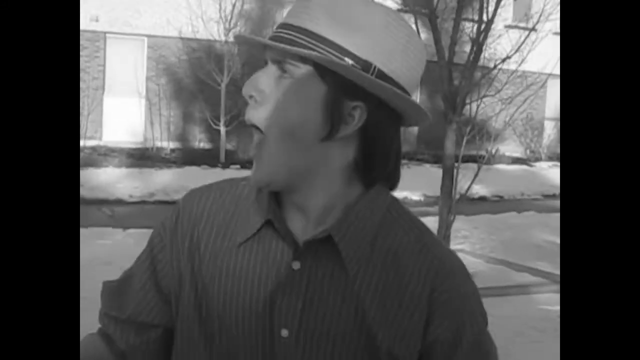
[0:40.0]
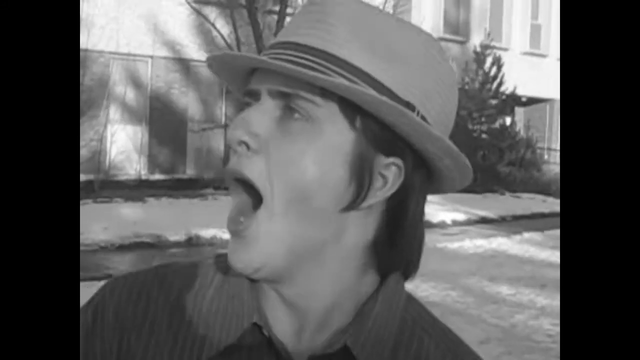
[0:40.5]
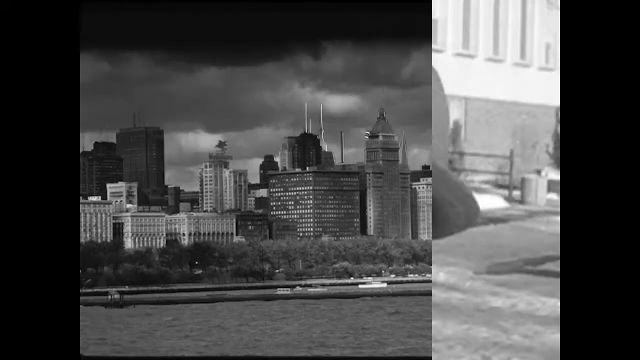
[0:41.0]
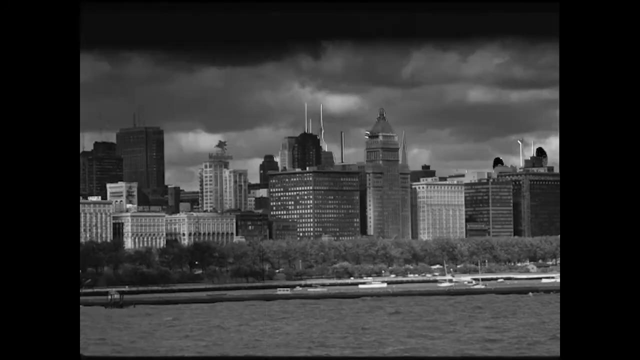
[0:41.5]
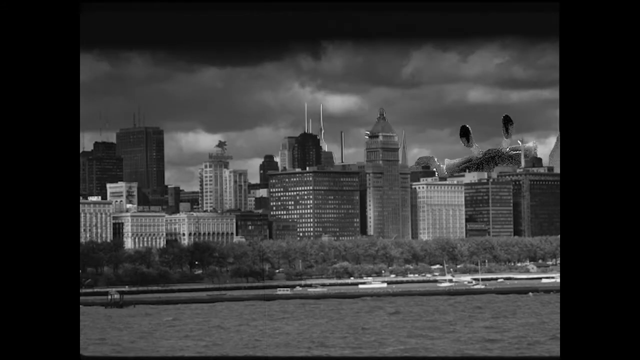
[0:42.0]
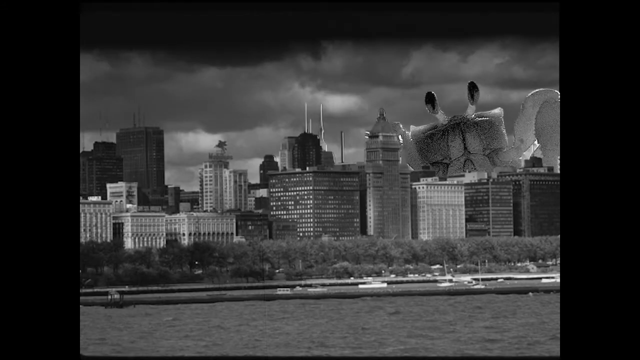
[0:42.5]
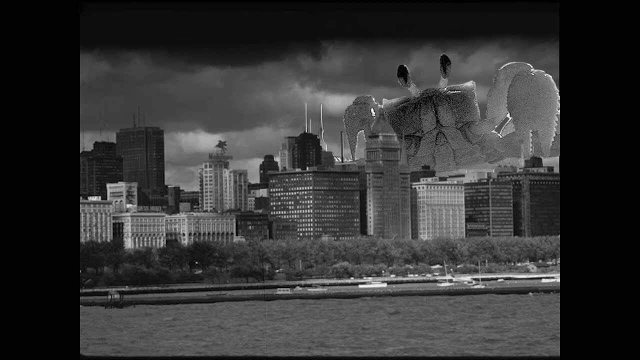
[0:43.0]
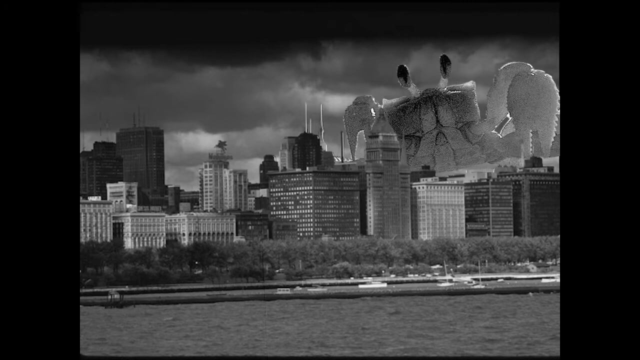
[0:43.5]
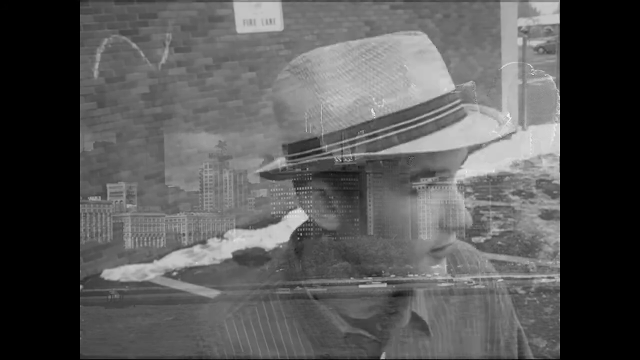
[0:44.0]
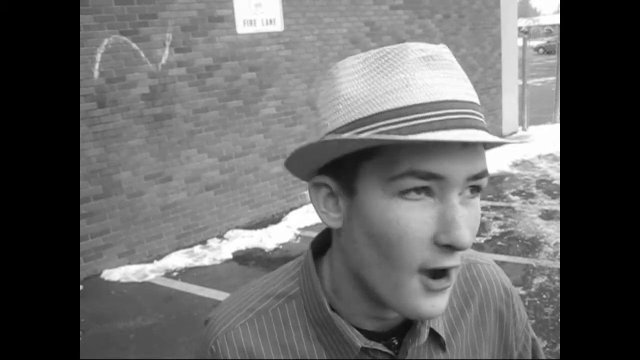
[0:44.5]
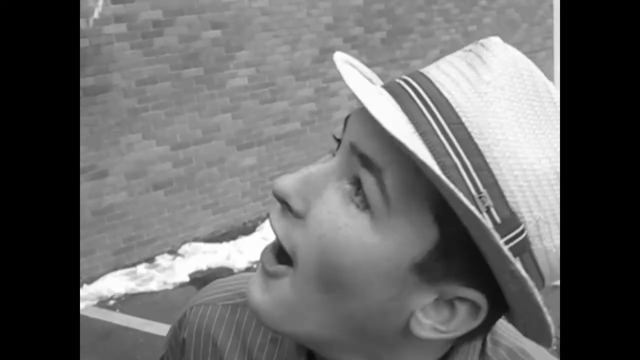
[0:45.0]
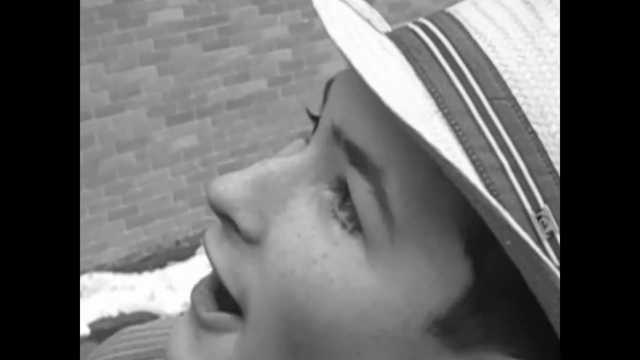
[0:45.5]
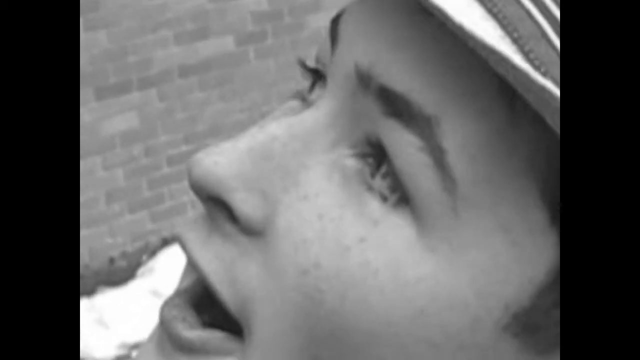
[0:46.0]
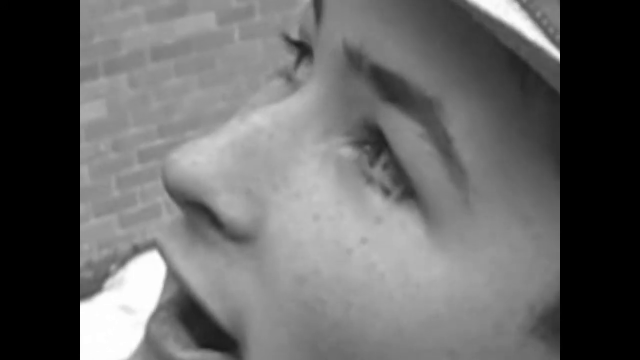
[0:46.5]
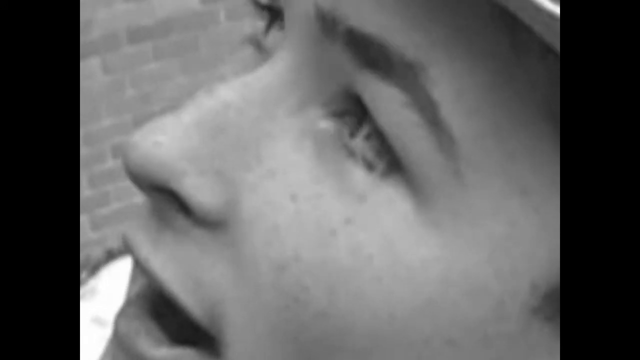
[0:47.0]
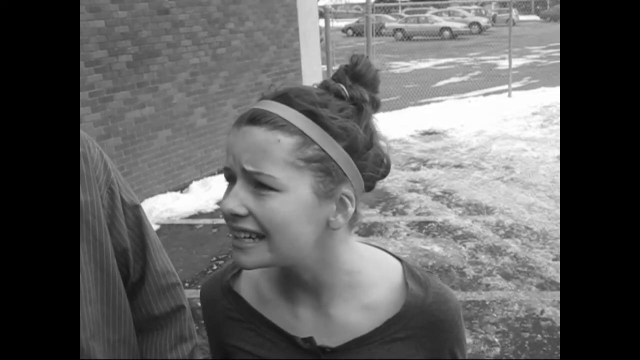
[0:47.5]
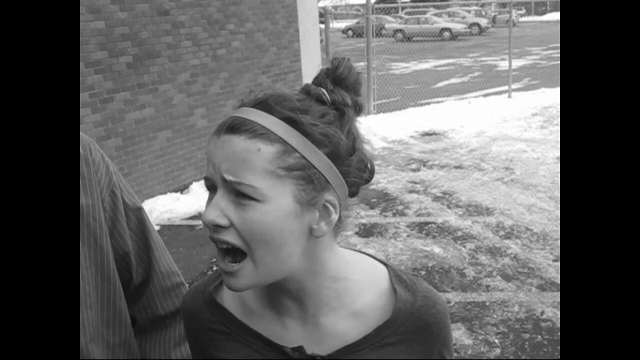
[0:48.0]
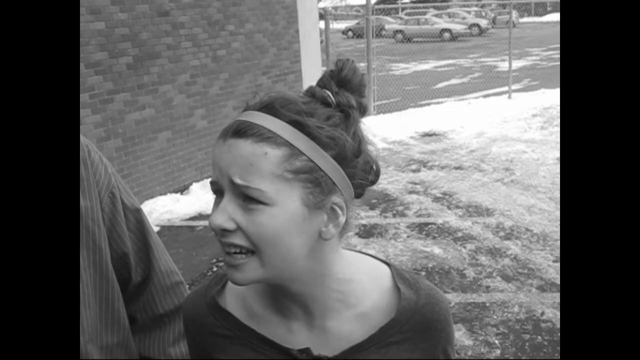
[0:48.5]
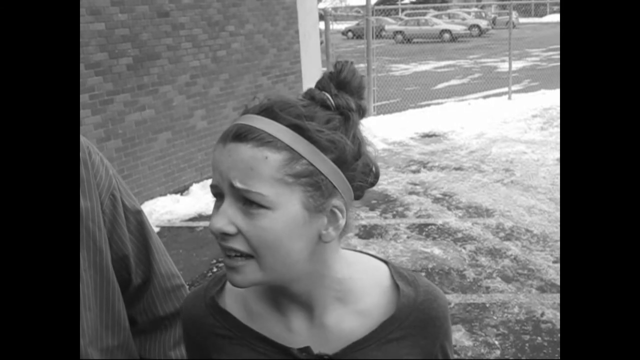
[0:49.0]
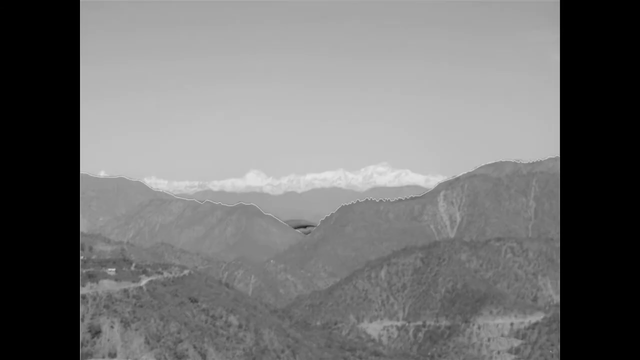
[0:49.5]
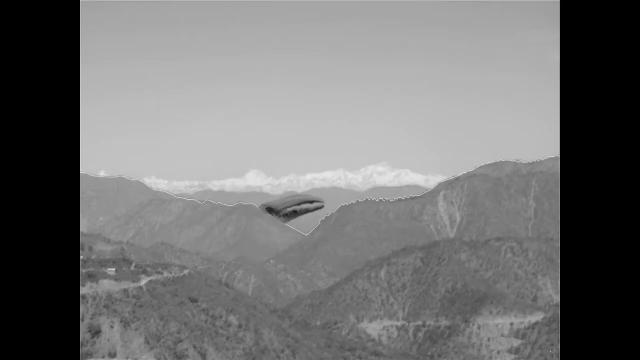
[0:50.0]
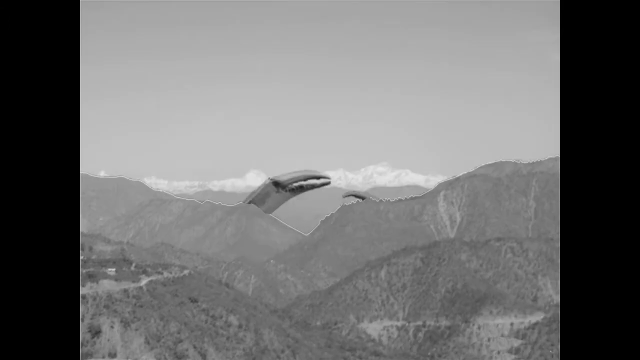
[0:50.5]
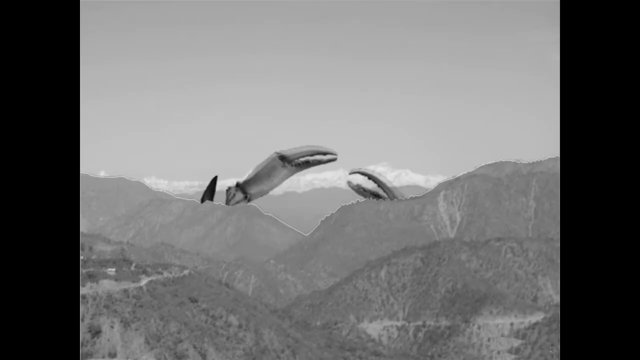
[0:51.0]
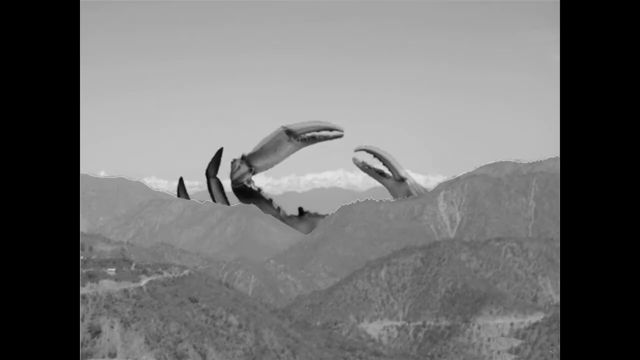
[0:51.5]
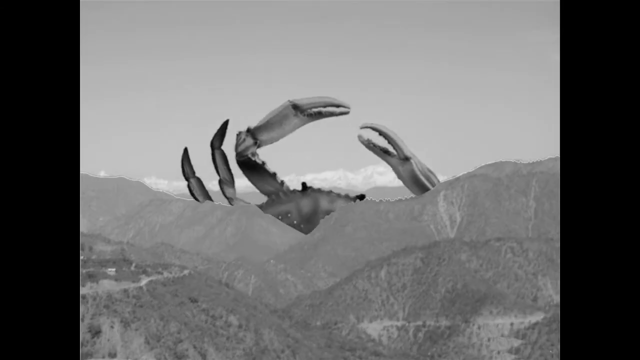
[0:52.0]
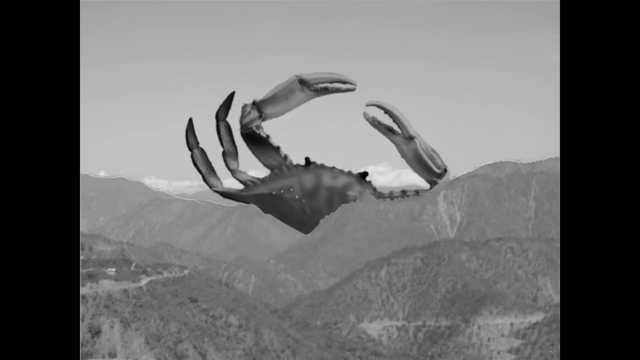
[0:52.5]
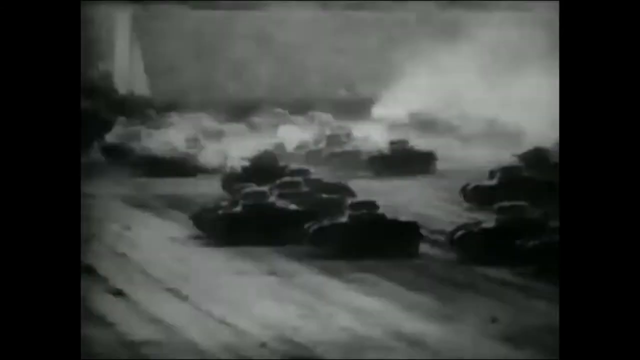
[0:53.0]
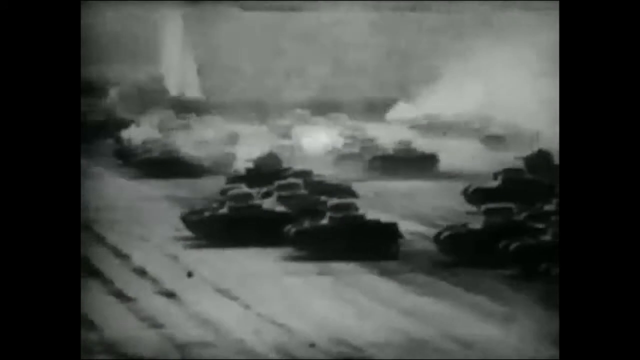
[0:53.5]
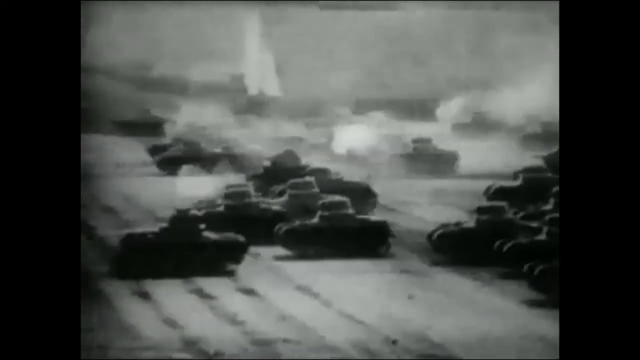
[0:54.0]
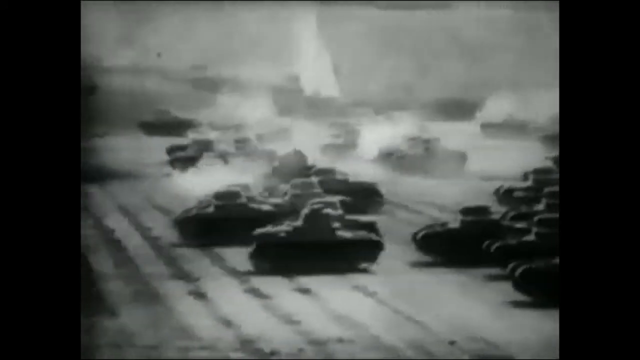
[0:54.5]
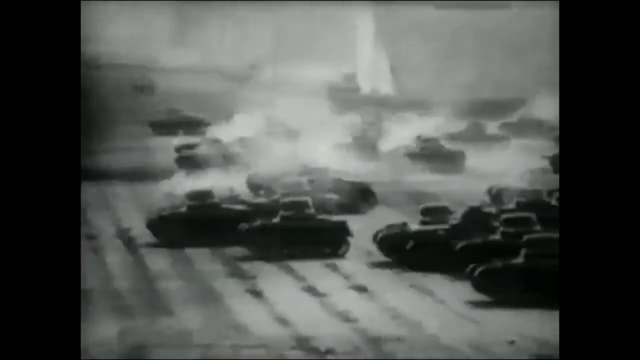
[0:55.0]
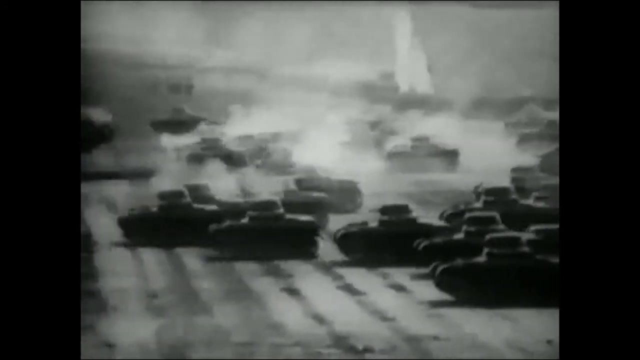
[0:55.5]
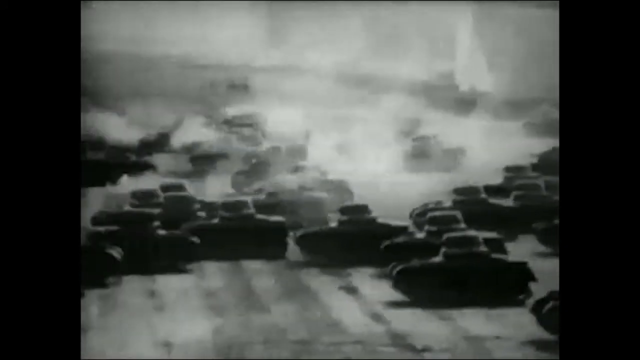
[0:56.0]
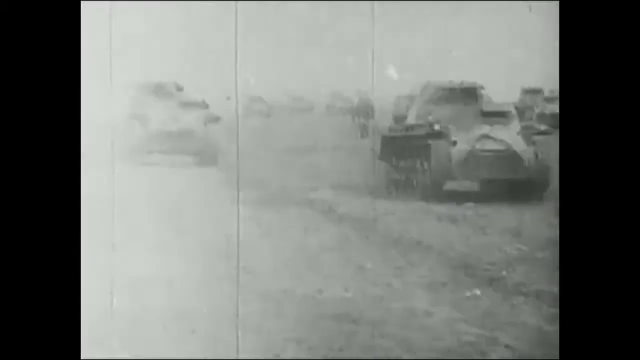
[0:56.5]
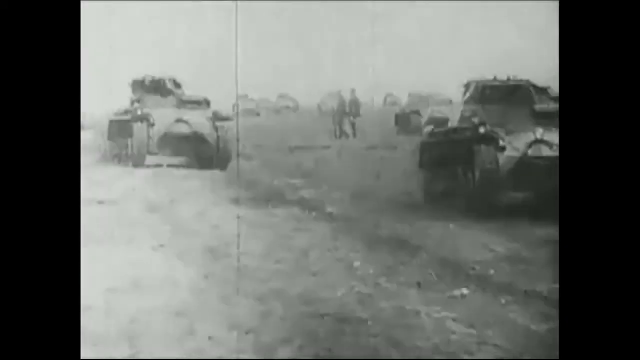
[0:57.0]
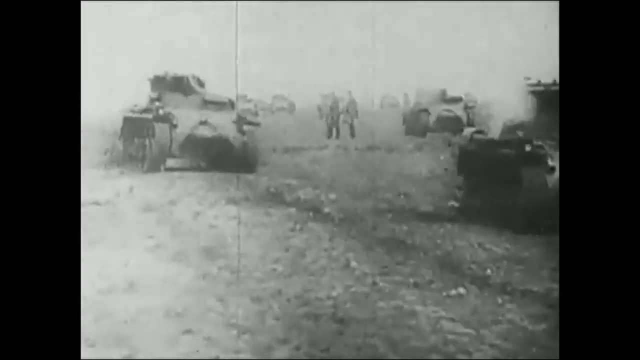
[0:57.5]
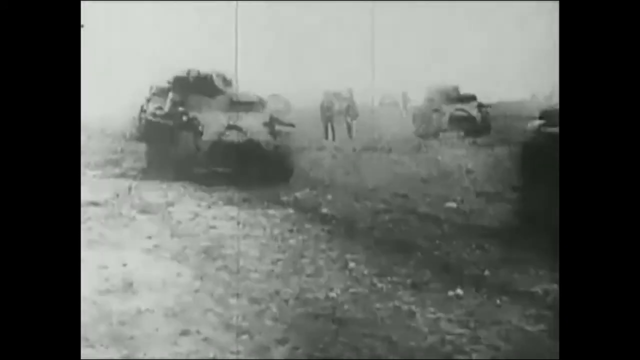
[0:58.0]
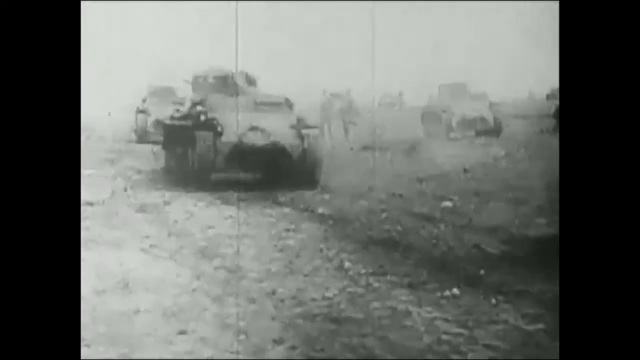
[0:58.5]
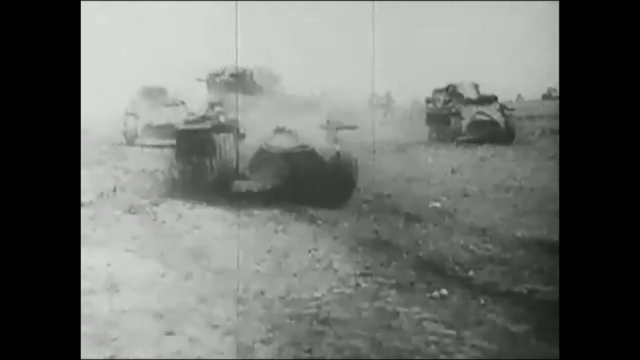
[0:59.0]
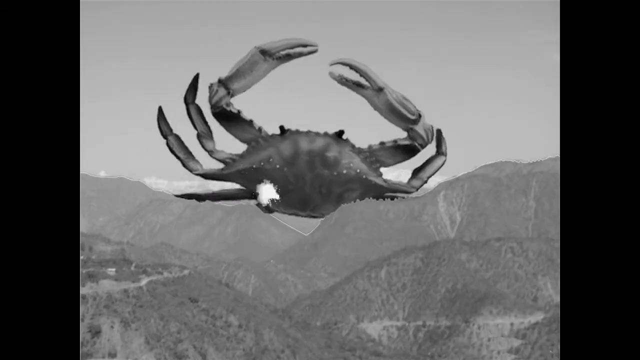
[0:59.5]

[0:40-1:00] The boy, with a shocked or surprised look on his face, stands in a snow-filled yard in front of an apartment building, looking towards the sky. The setting changes to a city scene with lots of skyscrapers and tall buildings, and emerging from a building is a large creature with what look like crab eyes and crab-like claws. A close-up shows a male's face and facial expression as his eyes look upward. A female with her hair pulled up and a headband has a fearful look on her face as she also looks up. The scene changes to a mountainous scene, still black and white, where a crab with two big claws comes up from behind the mountains. Next, lots of tanks, at least 15 to 20, move around, followed by more tanks and what appear to be shots being fired at the crab.